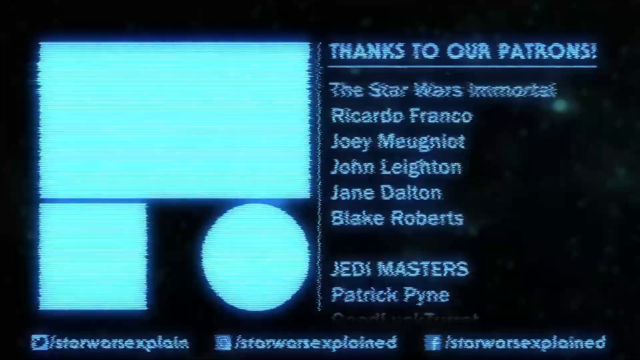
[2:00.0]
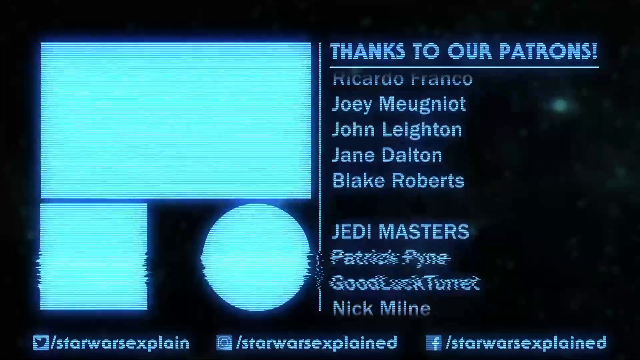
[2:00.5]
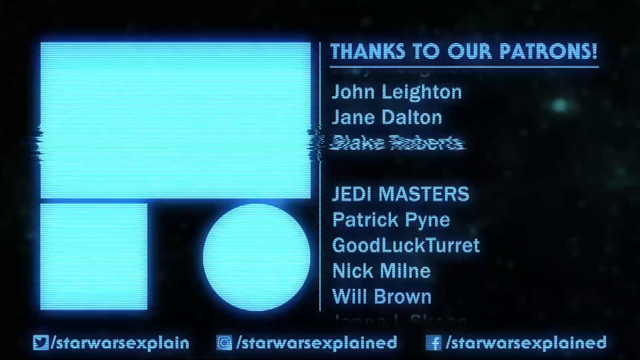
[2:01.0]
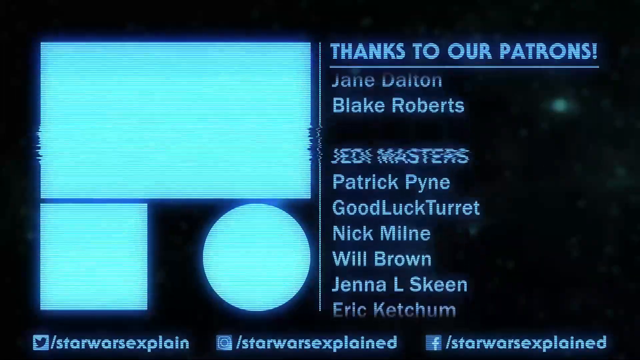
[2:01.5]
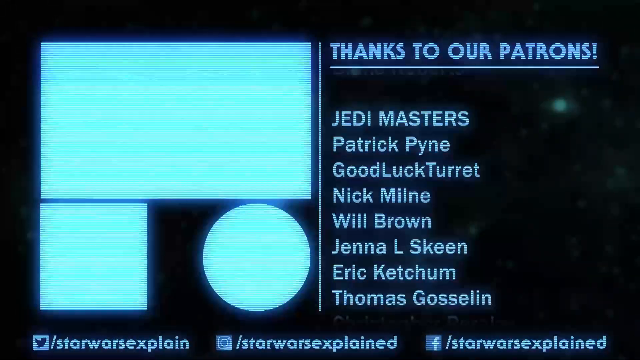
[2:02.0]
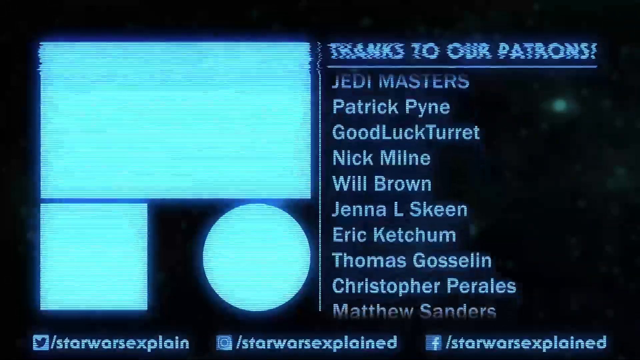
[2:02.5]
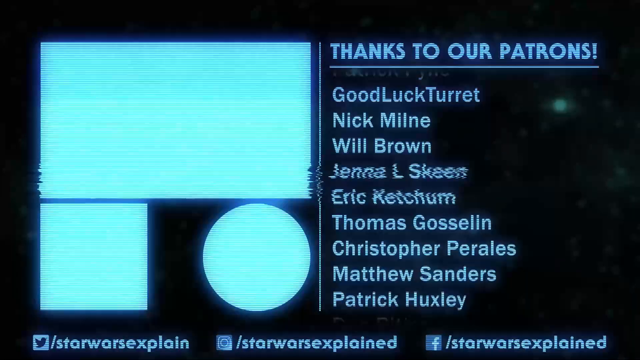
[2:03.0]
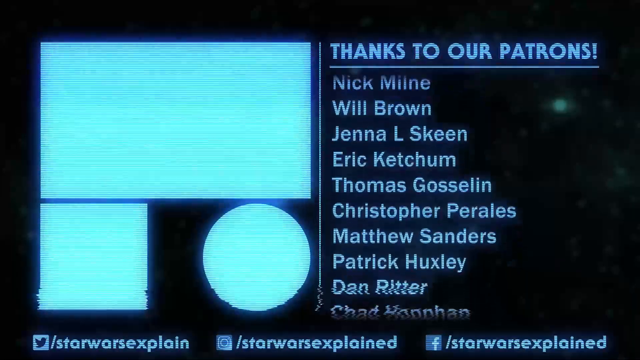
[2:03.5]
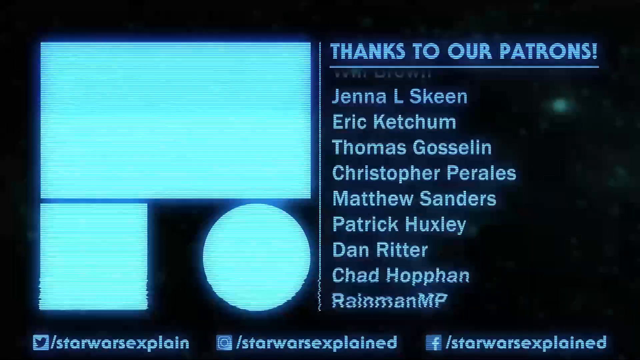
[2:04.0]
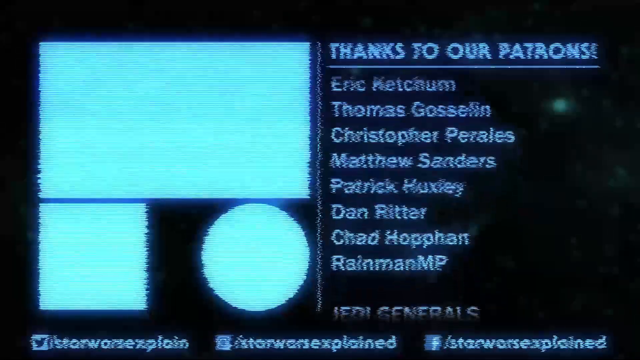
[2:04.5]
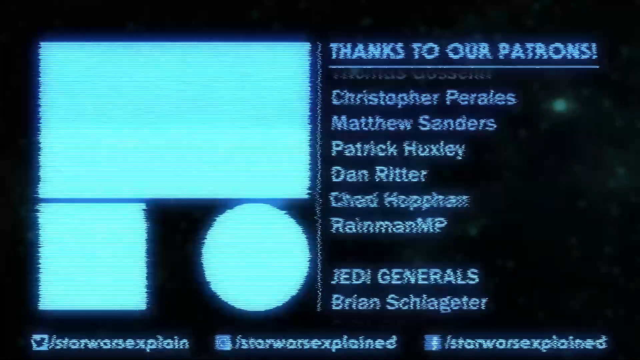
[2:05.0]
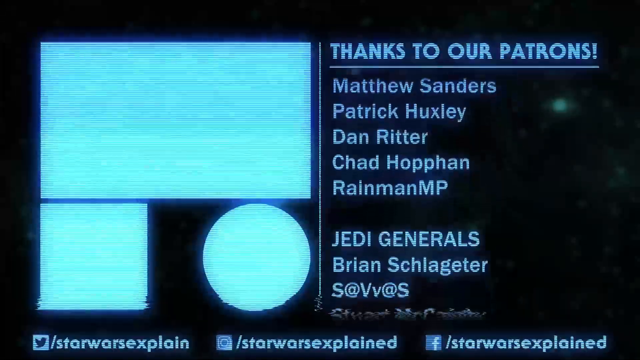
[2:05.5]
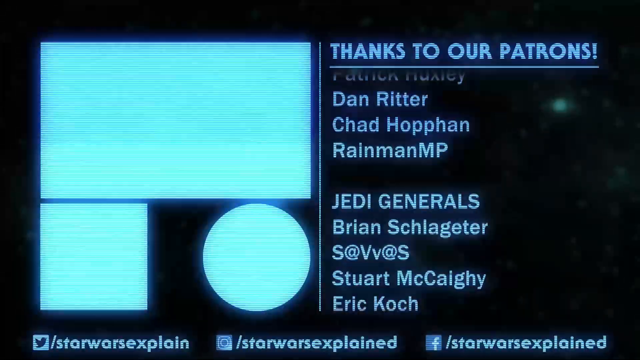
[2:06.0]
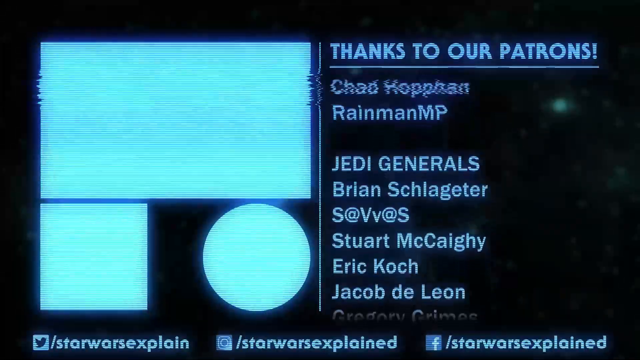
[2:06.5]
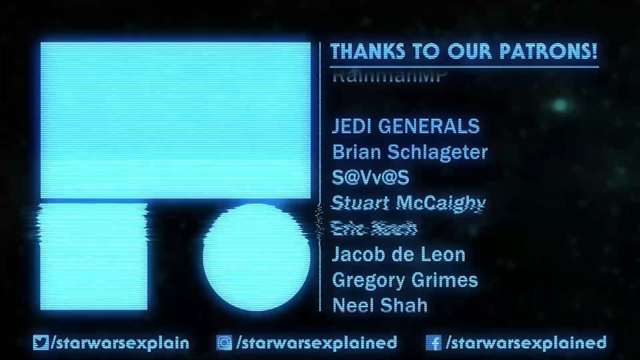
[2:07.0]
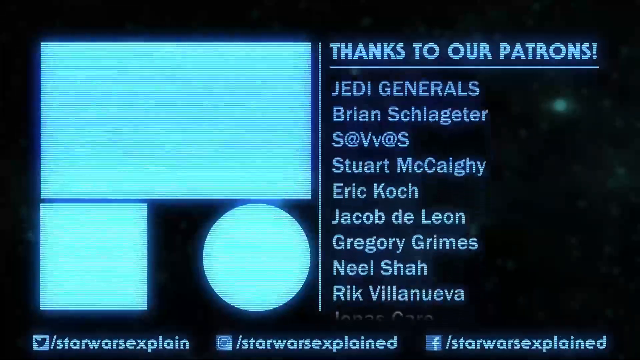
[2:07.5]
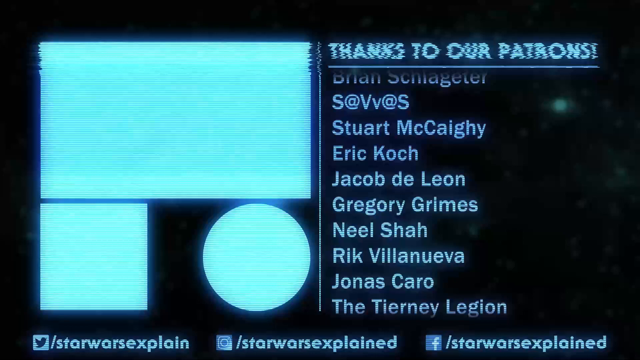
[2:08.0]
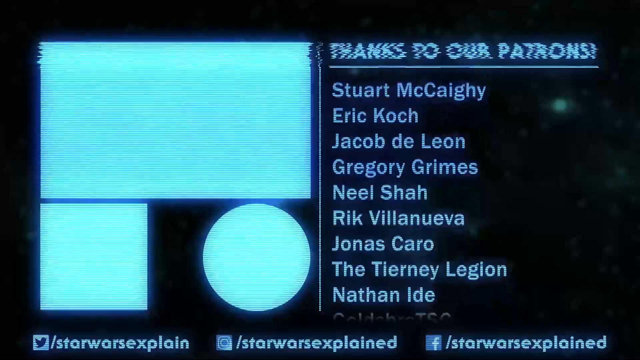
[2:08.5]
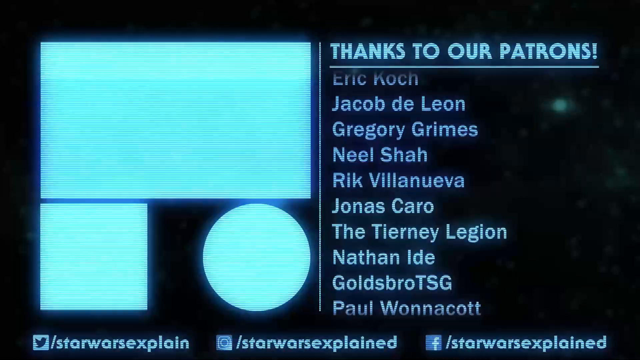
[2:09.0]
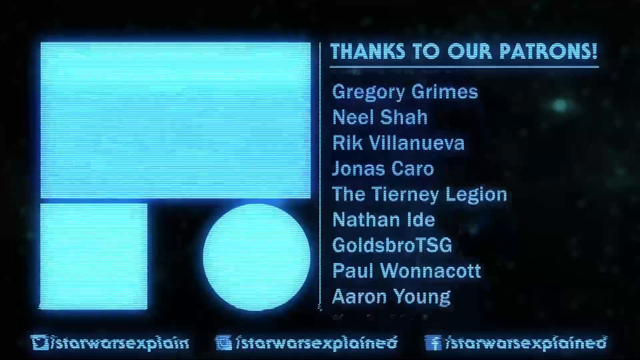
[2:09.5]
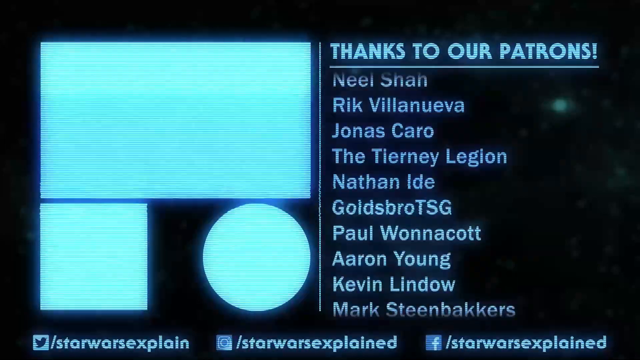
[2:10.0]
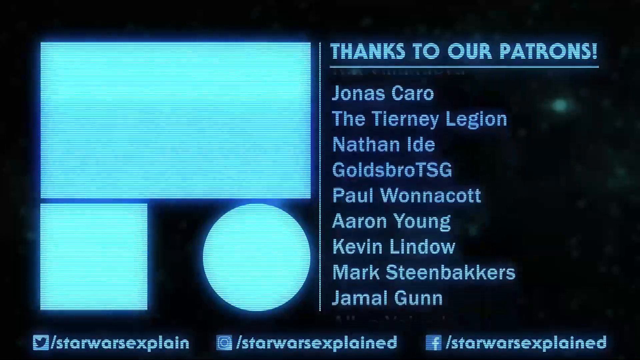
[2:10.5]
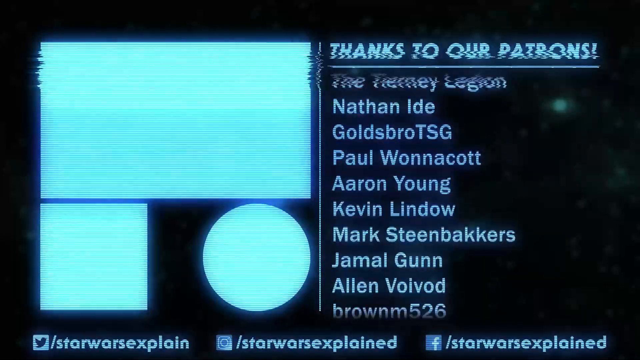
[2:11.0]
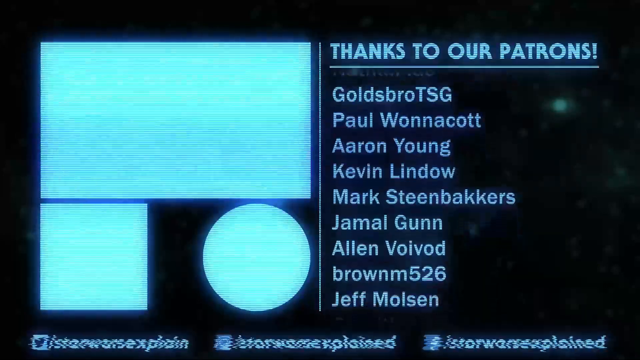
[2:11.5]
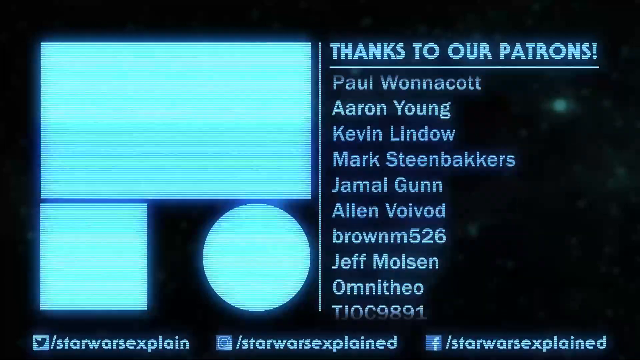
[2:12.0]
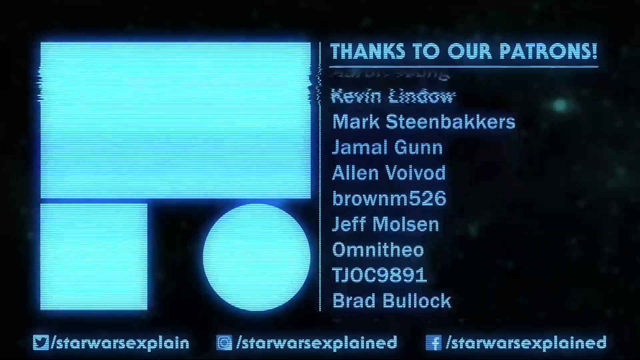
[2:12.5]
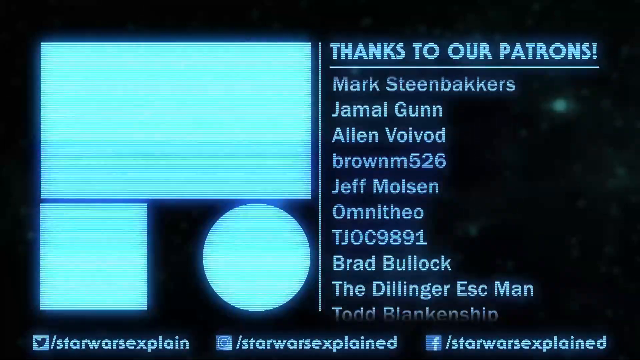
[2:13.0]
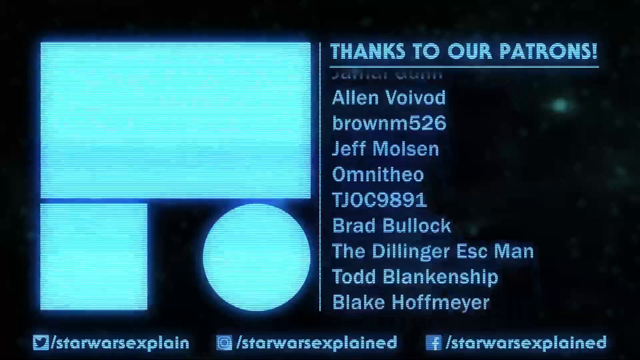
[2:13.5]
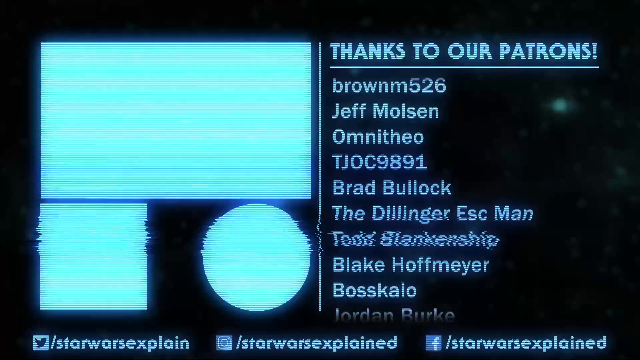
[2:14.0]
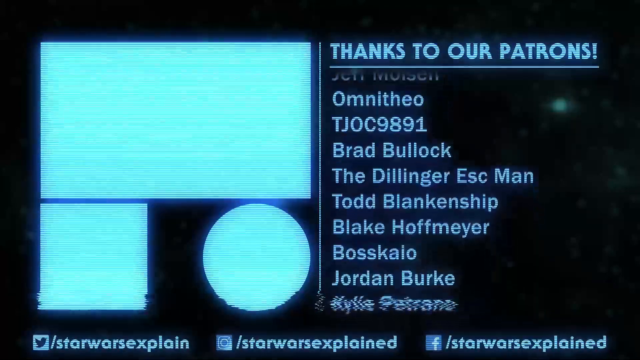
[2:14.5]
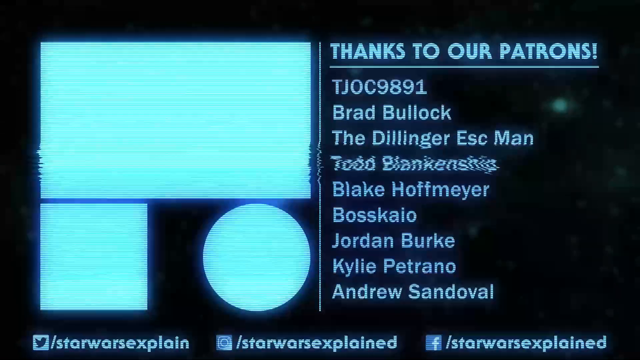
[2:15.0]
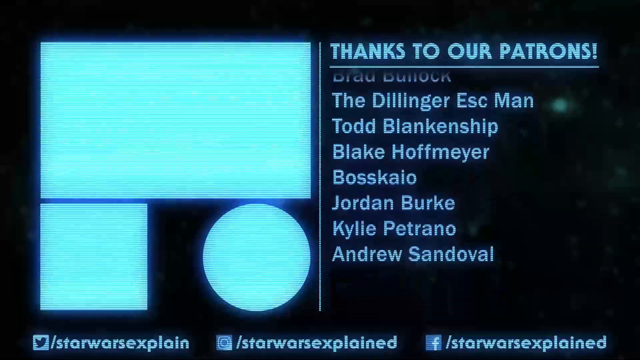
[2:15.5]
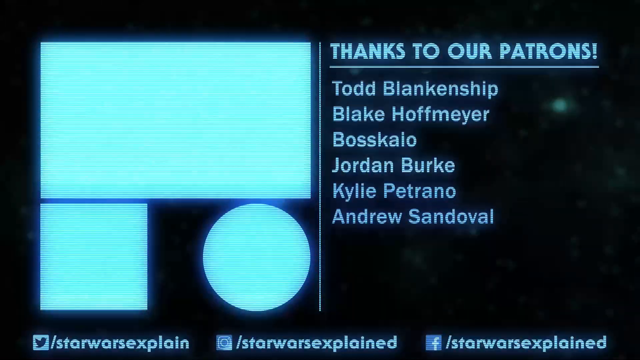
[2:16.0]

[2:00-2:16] The closing screen shows, on the left, a pattern of three light blue geometric shapes: a large rectangle at the top, and below it a square on the left and a circle on the right. On the right, a header says "Thanks to our Patrons," and names scroll up from the bottom of the screen. The people on the list are classified into different groups, including one called Jedi Masters and another called Jedi Generals. Quite a lot of names appear, some actual names and some screen names. The background on the right looks vaguely like outer space: black with little glowing lights that look like stars, with a slight light blue tinge.